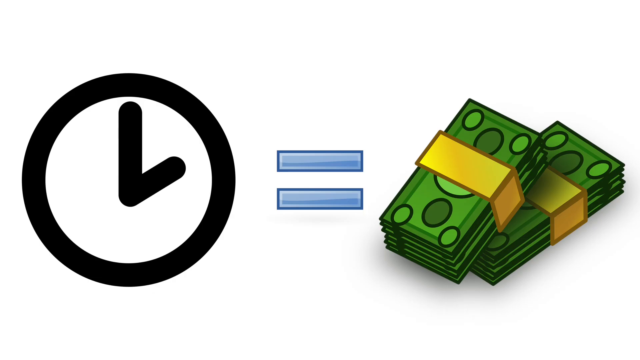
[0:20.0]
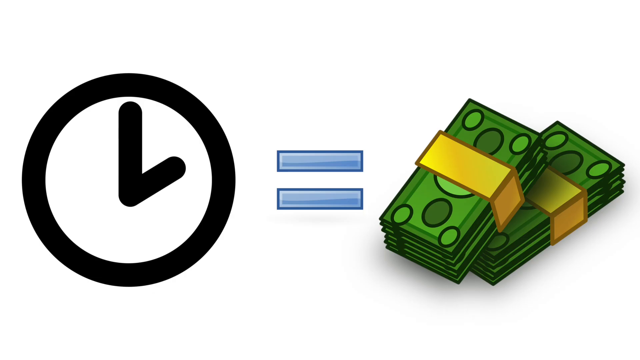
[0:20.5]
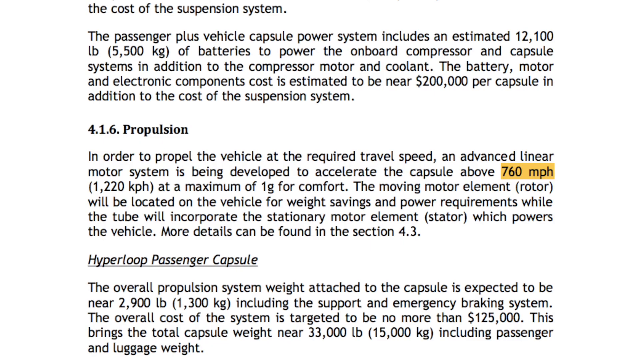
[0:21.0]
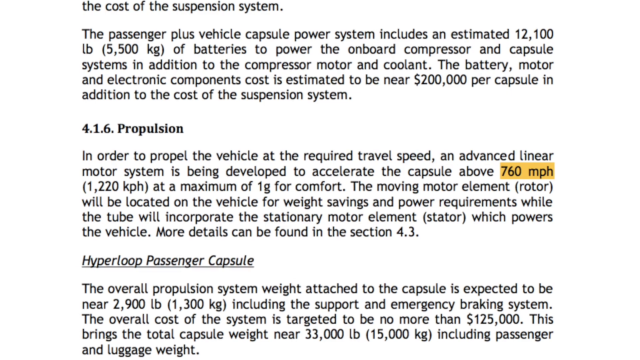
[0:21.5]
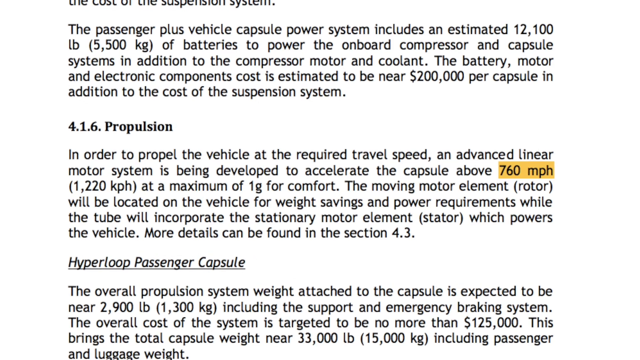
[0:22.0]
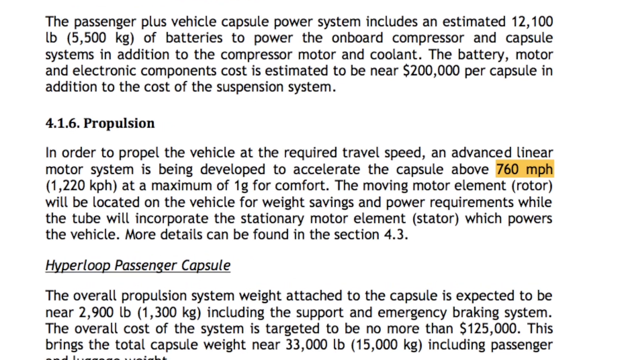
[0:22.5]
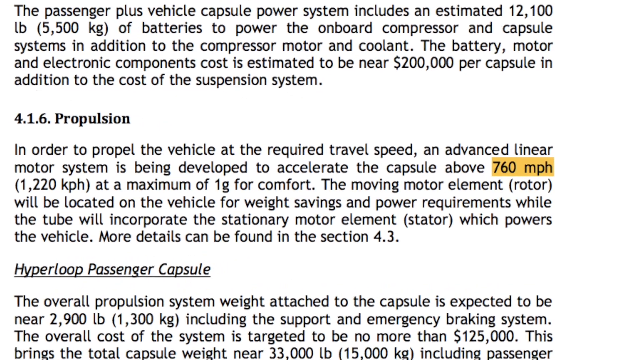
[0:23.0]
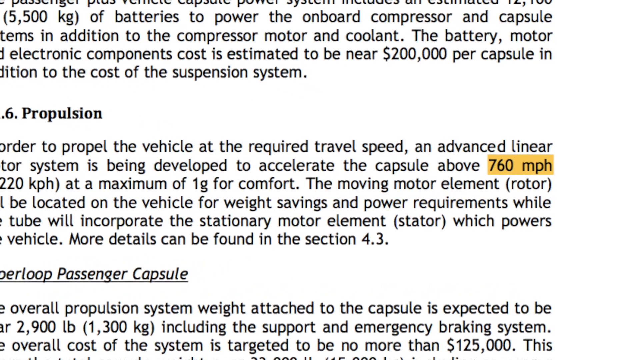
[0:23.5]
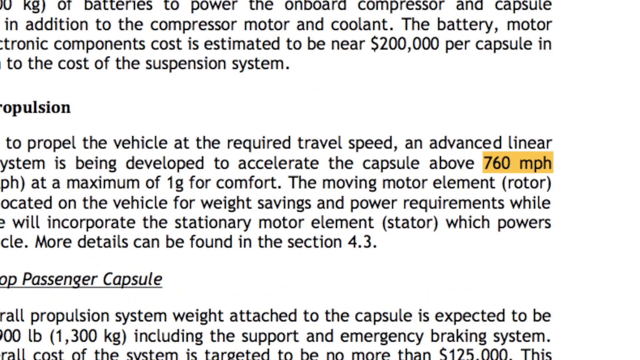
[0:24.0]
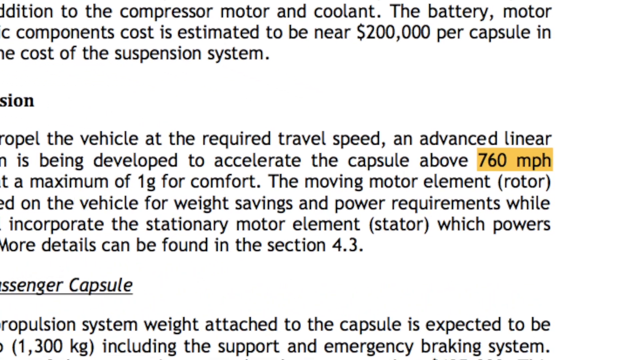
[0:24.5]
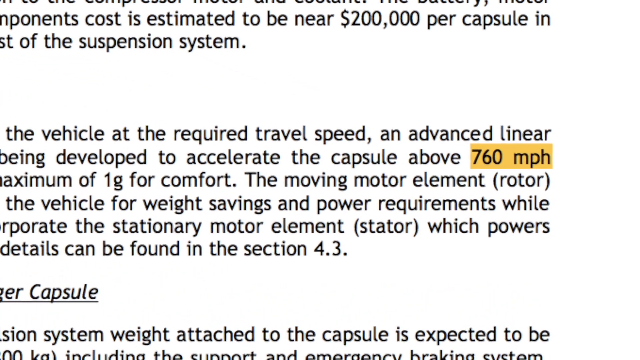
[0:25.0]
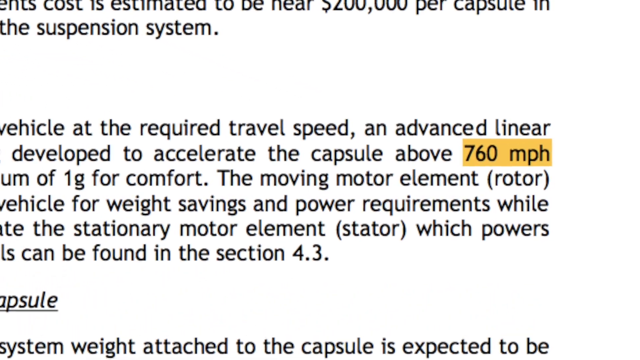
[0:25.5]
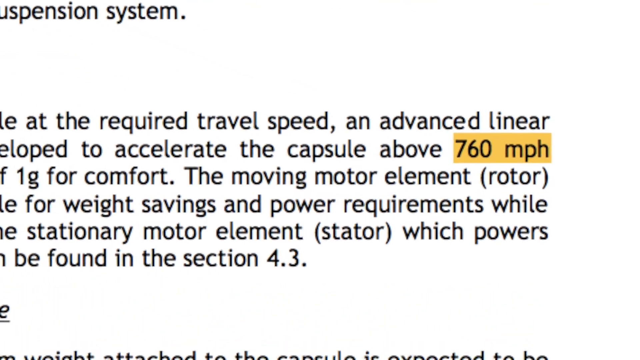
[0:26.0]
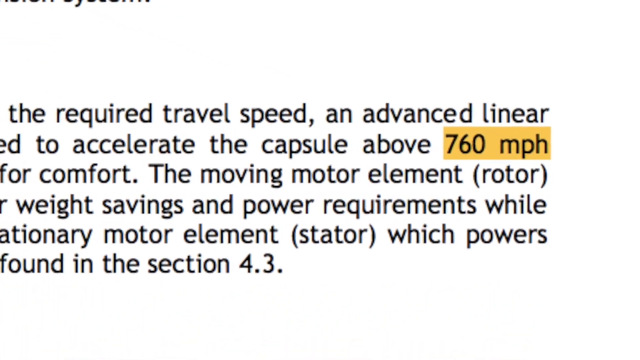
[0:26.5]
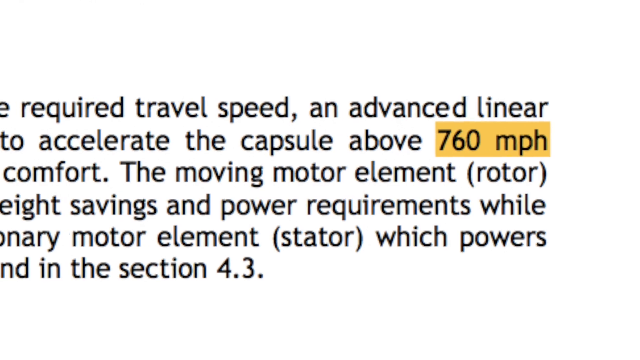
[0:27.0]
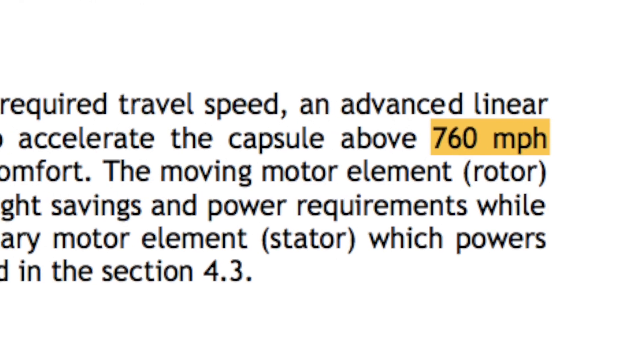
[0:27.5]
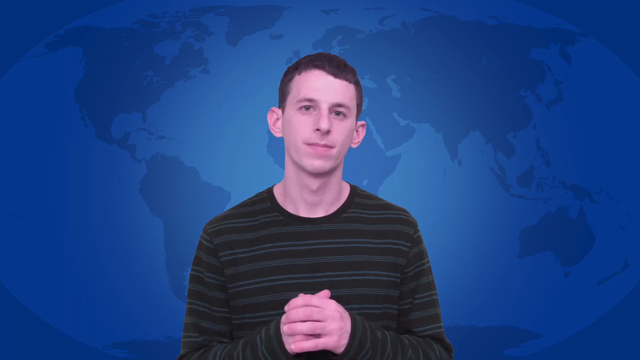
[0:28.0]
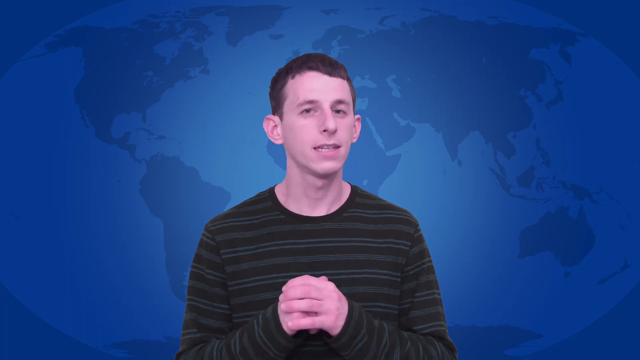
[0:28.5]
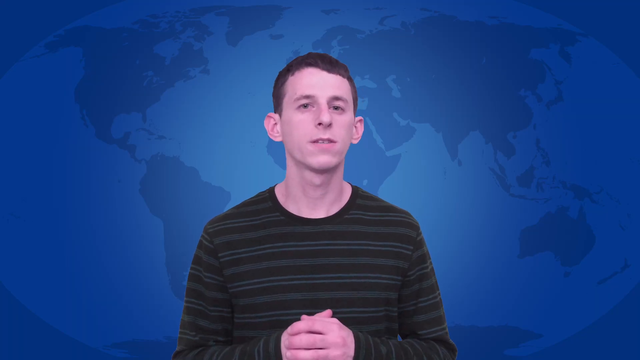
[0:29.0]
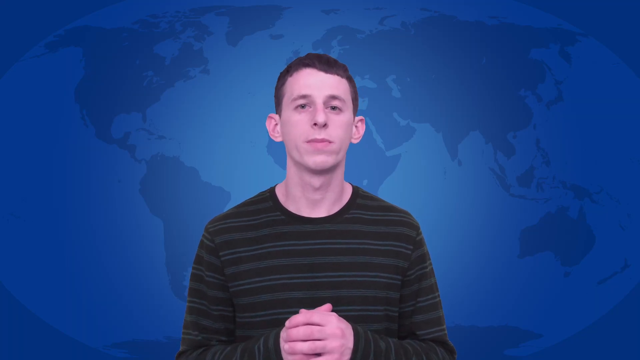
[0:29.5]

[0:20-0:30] The time-equals-money symbols open the shot. A couple of paragraphs of text follow, mentioning a passenger power system, a battery, 760 miles per hour for propulsion and the Hyperloop passenger capsule, with 760 miles per hour highlighted. The young man talks again. Text also shows hyper propulsion, states that the capsule is expected to be near 2,900 pounds, gives a cost of about 125,000, and says it weighs about 33,000 pounds including passengers and luggage.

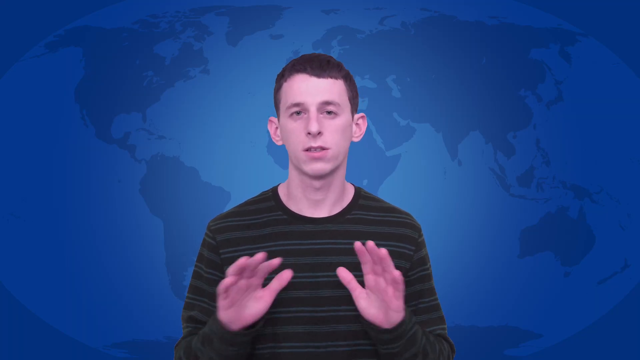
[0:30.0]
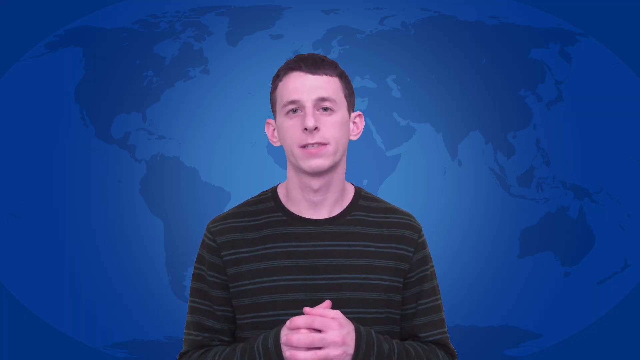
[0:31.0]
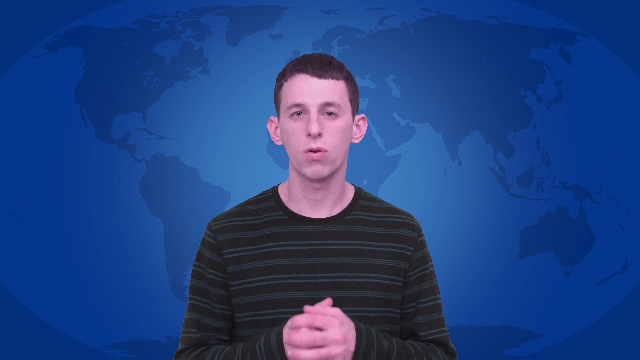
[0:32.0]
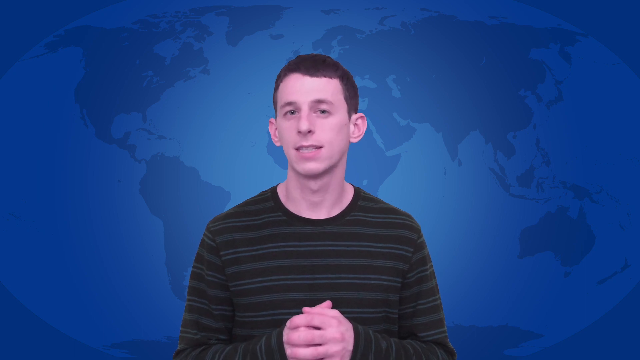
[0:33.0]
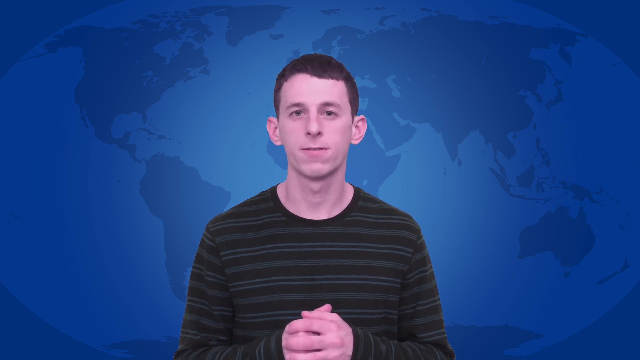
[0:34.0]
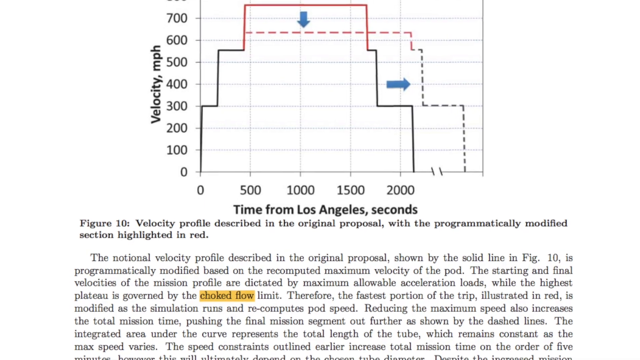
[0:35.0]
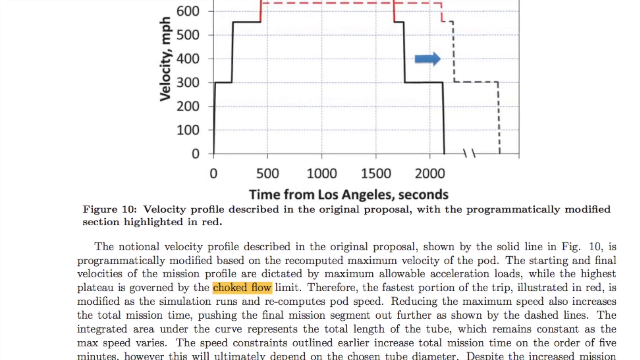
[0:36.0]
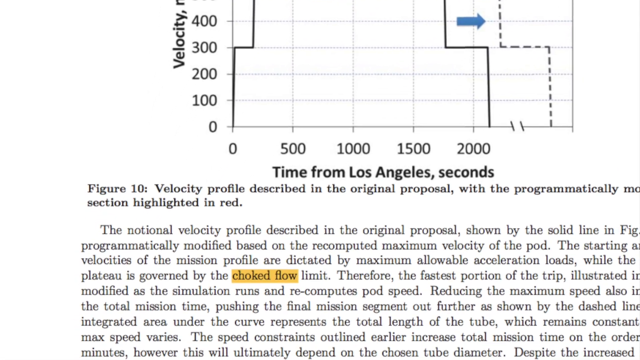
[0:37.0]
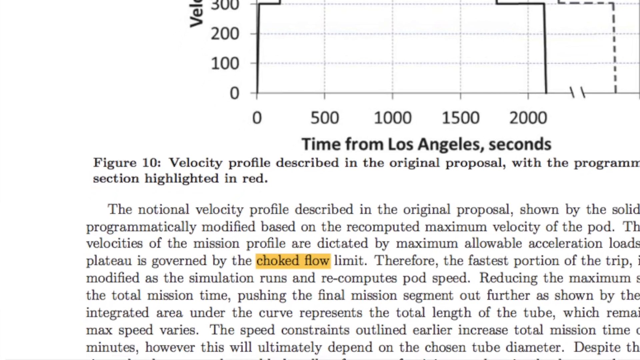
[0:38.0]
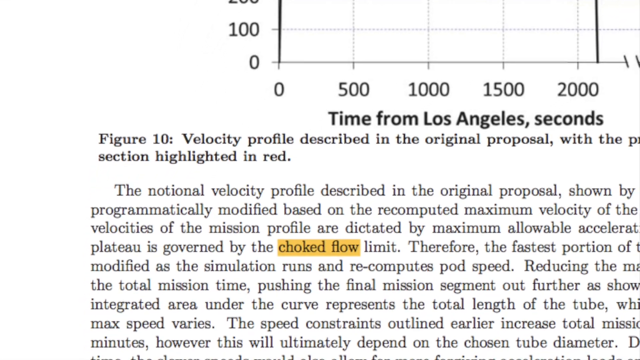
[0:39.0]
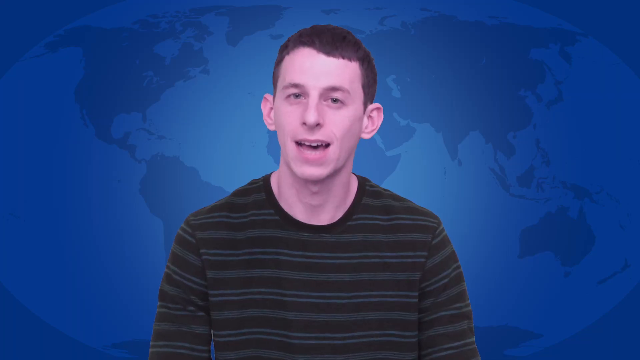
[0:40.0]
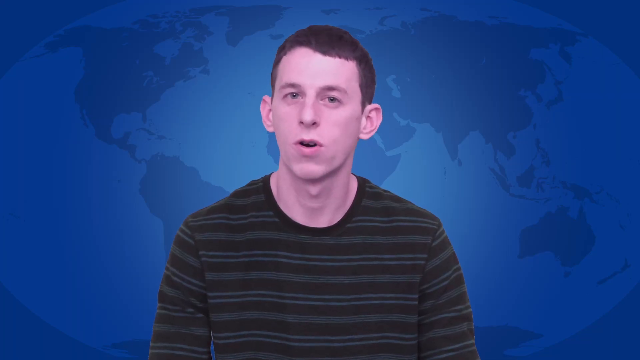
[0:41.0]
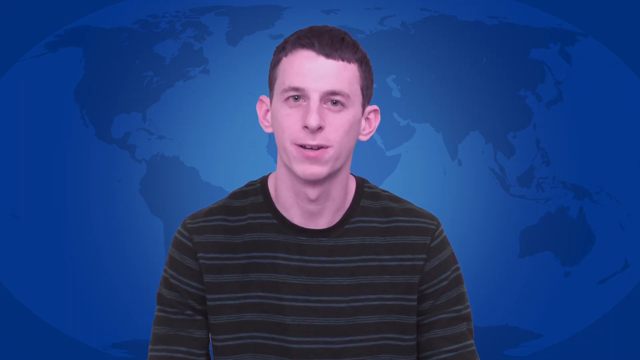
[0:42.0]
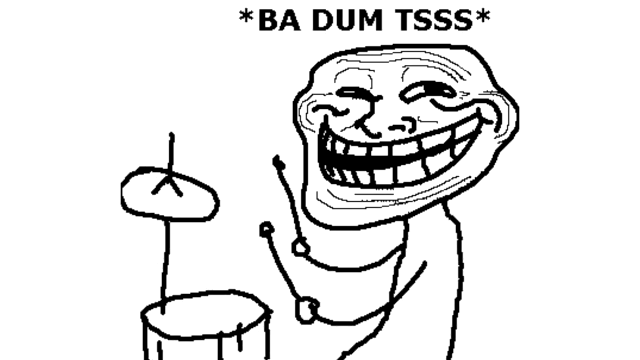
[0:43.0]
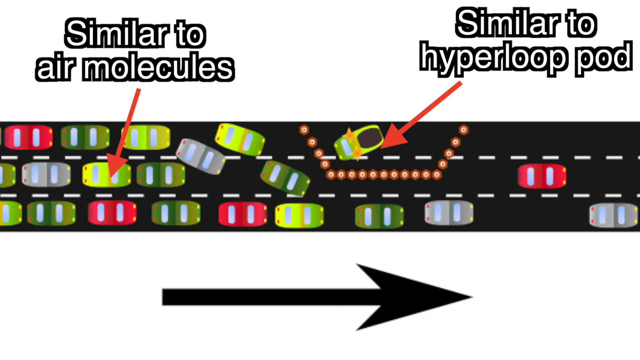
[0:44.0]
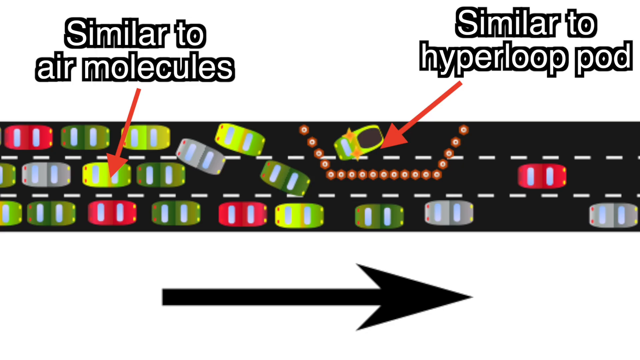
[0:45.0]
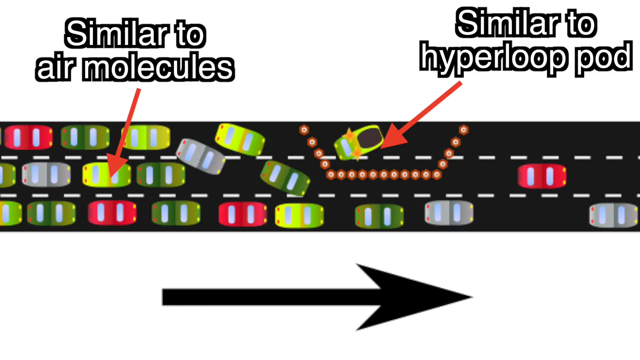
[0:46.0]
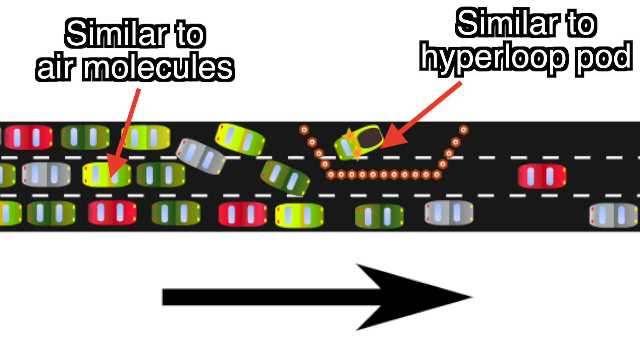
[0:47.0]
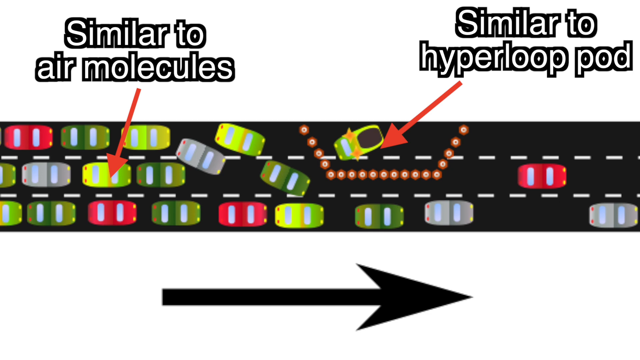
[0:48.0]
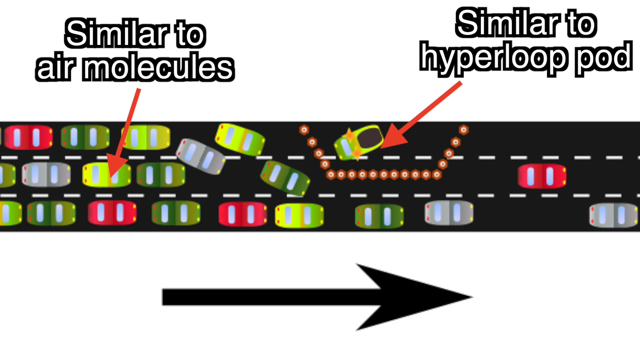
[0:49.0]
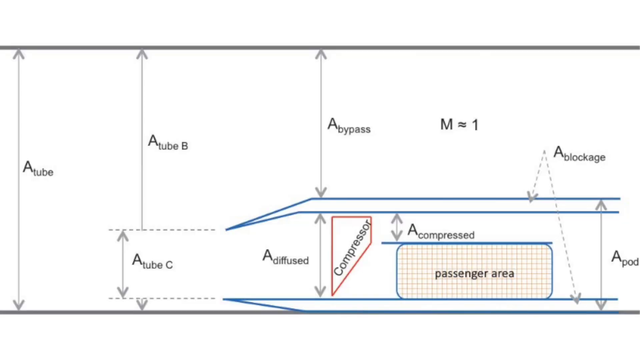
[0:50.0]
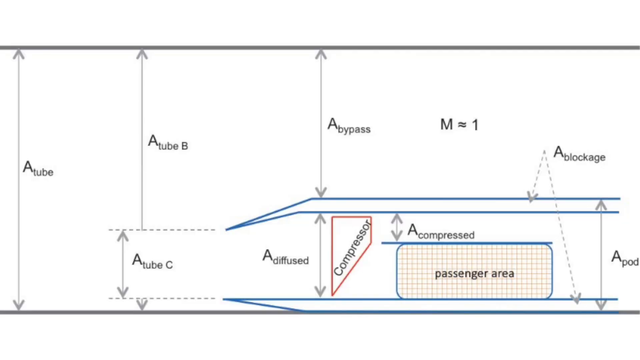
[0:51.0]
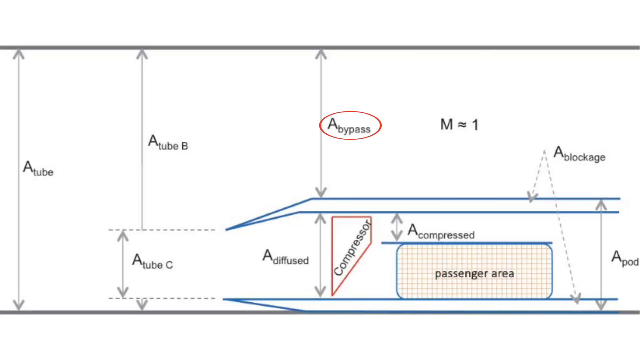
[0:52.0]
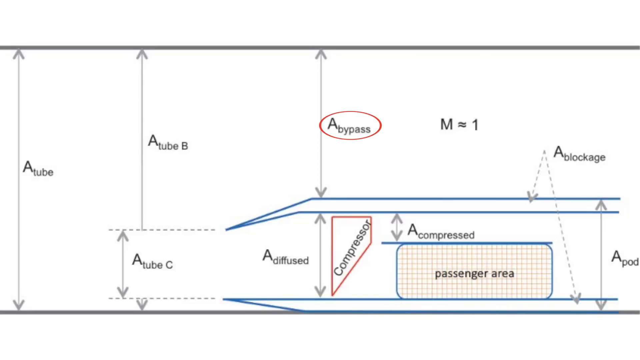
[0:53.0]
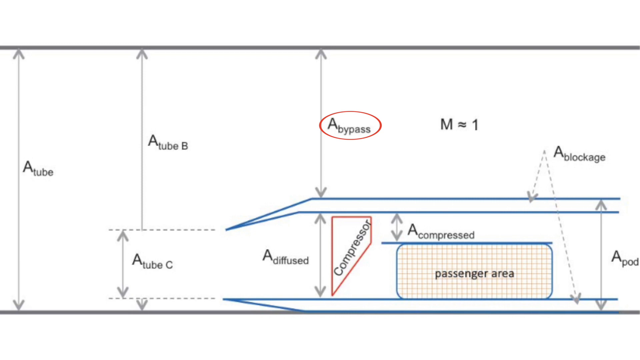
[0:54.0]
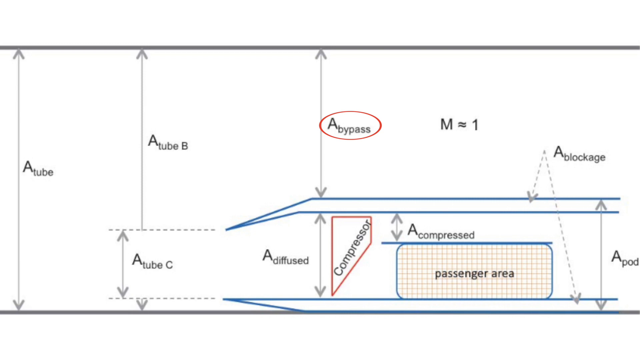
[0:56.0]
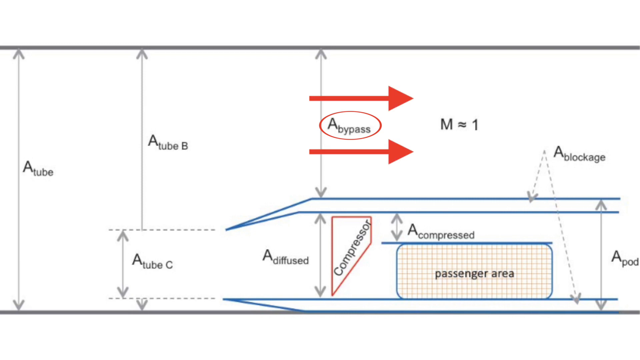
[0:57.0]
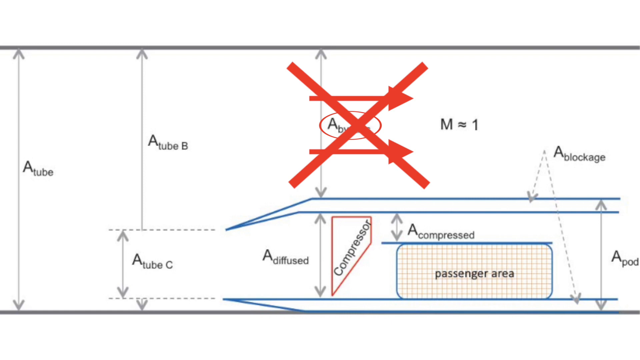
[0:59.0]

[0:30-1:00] The young man talks with his hands kind of folded together. Then some kind of chart or graph appears, with velocity in miles per hour, time from Los Angeles in seconds and high velocity; something is highlighted in red and something in orange or yellow, and text reads "choked flow limit." The man talks again. Next, an image that looks like cars on a road, close together, is labeled "similar to air molecules," and off to the right something labeled "similar to a hyper loop pod" is turned at an angle. A diagram shows a bypass, a passenger area and a compressor, and then a big X crosses out the bypass.